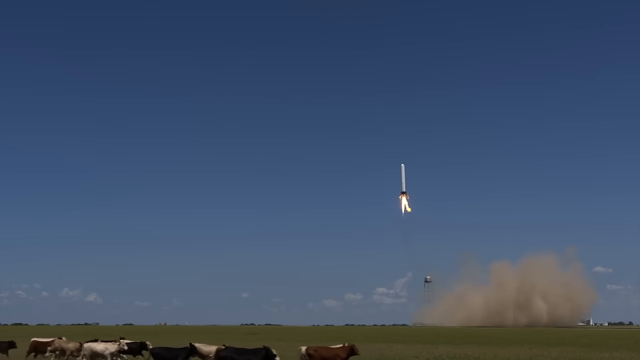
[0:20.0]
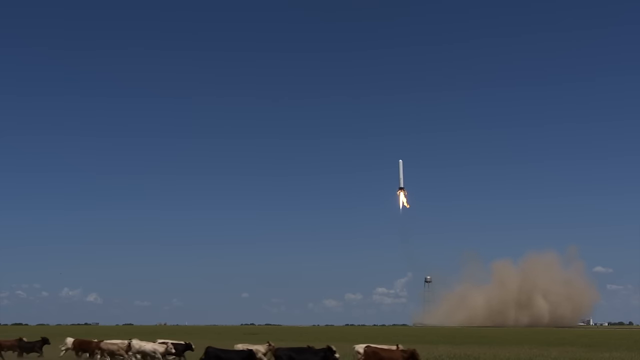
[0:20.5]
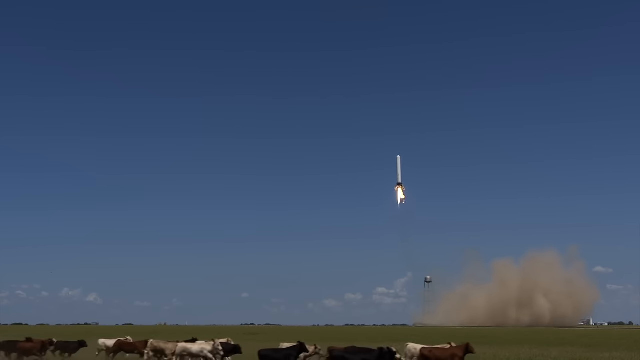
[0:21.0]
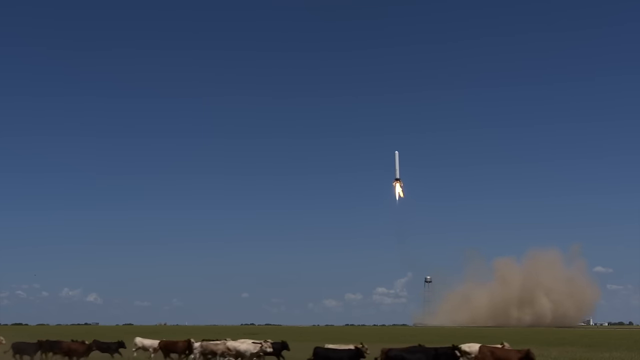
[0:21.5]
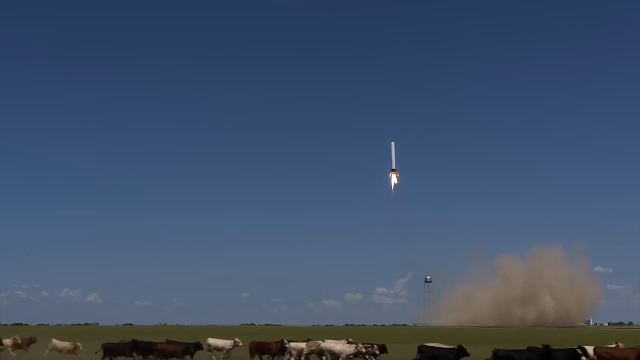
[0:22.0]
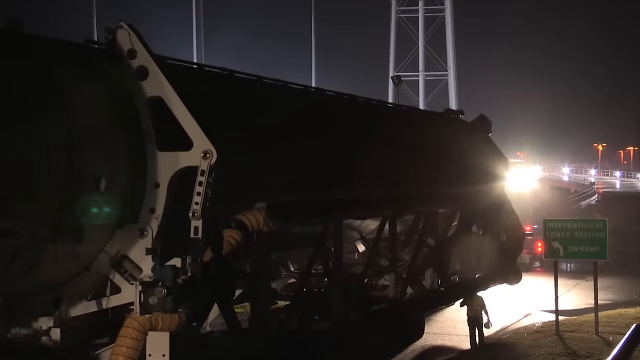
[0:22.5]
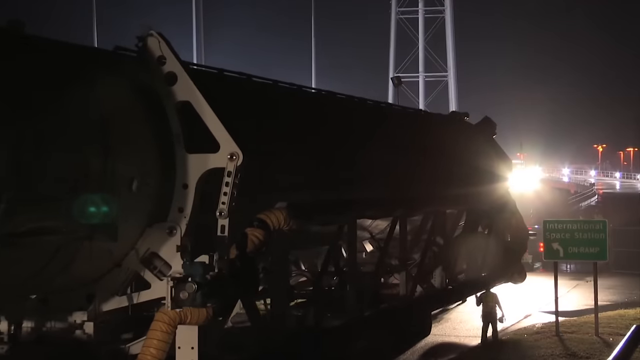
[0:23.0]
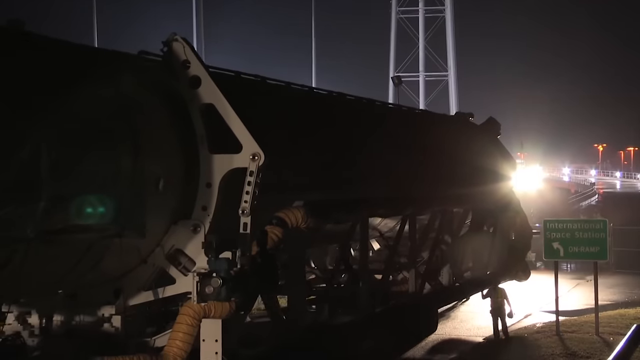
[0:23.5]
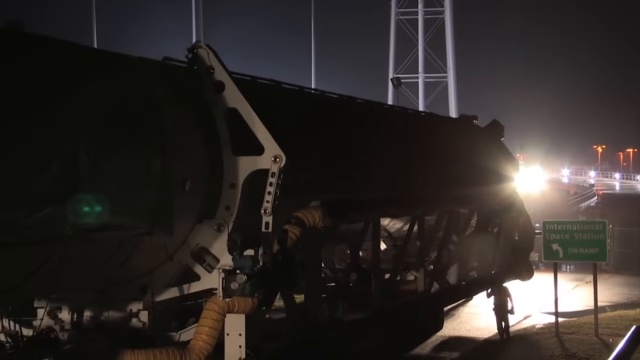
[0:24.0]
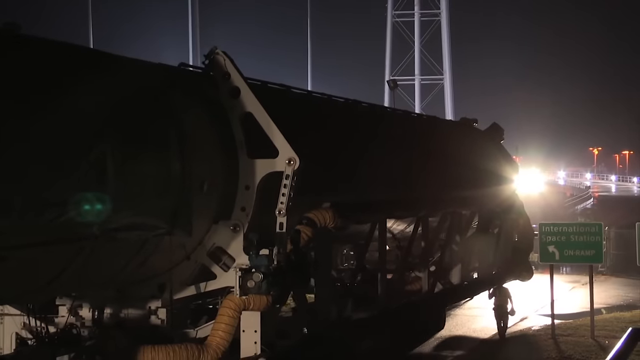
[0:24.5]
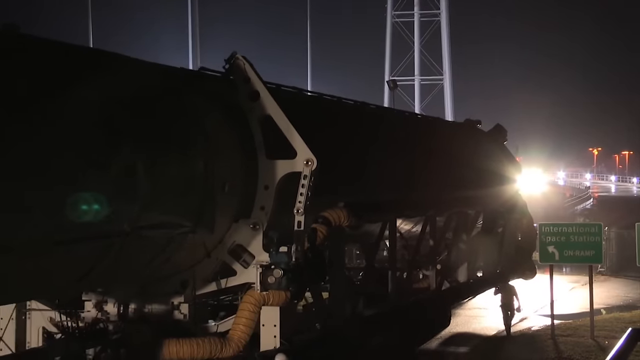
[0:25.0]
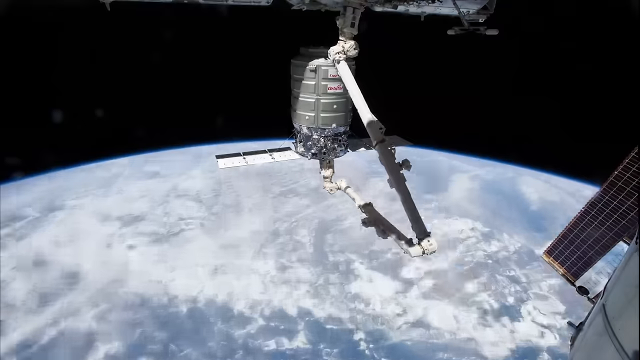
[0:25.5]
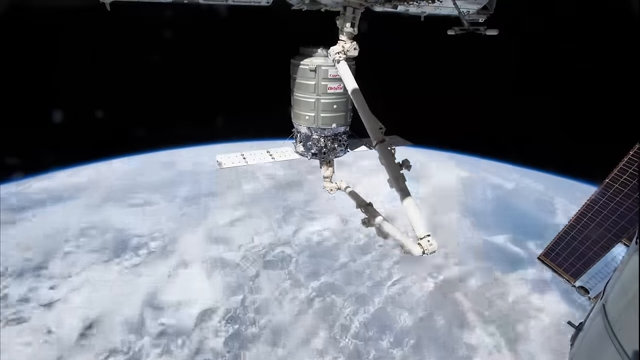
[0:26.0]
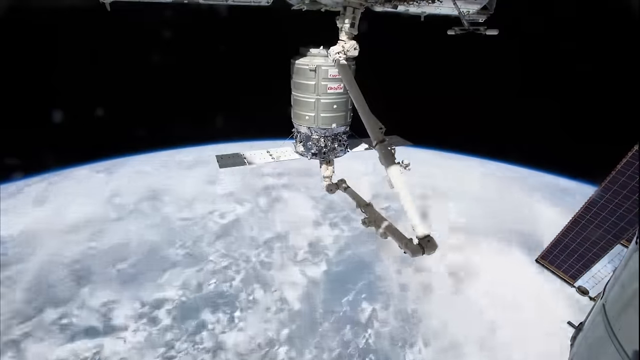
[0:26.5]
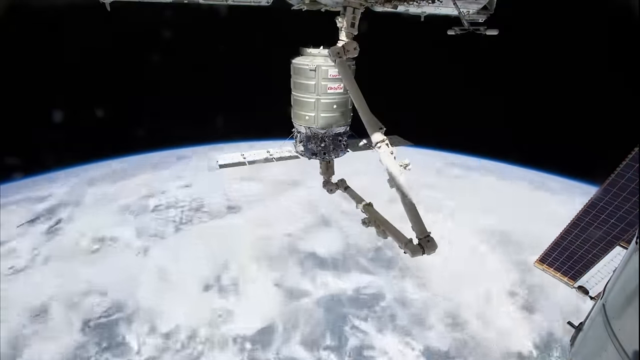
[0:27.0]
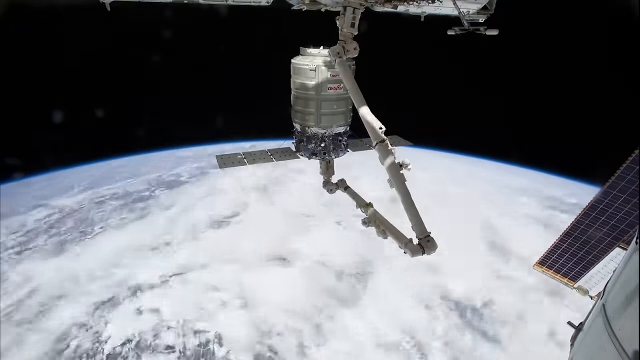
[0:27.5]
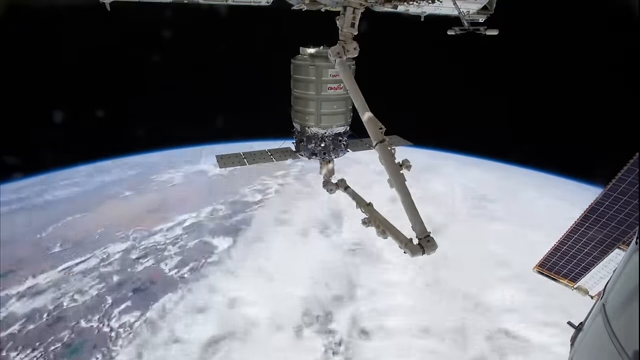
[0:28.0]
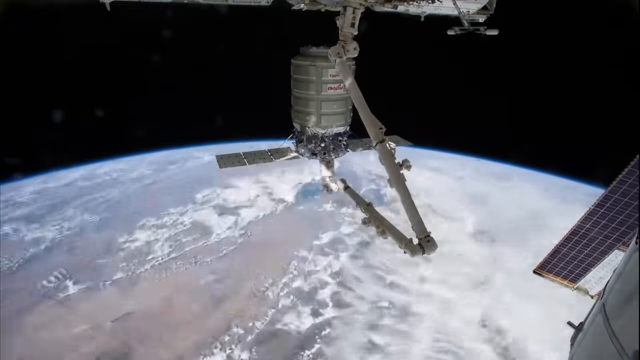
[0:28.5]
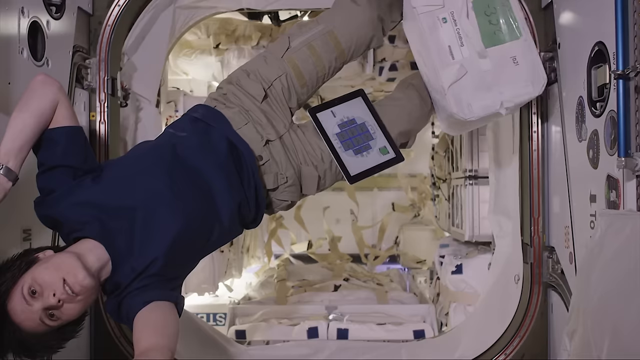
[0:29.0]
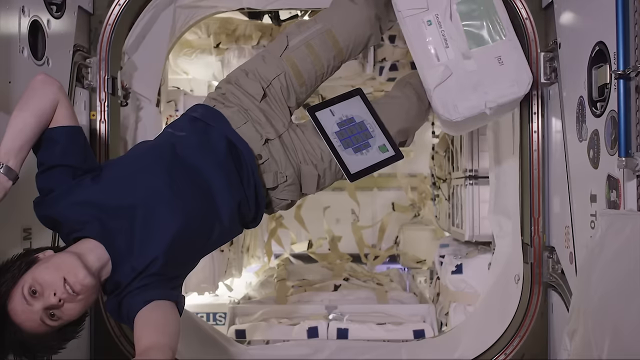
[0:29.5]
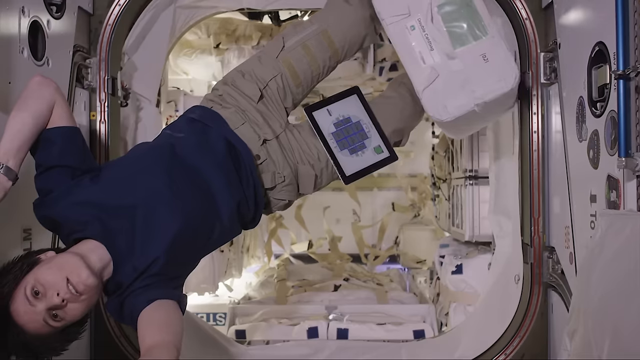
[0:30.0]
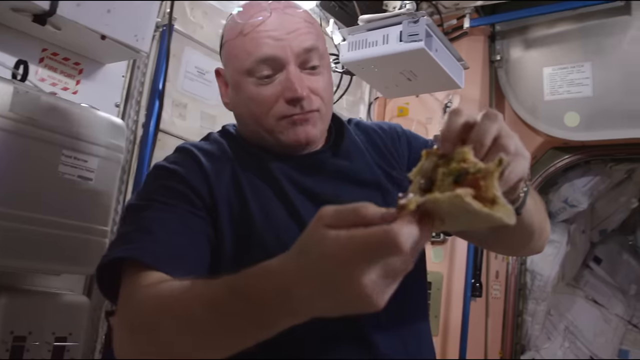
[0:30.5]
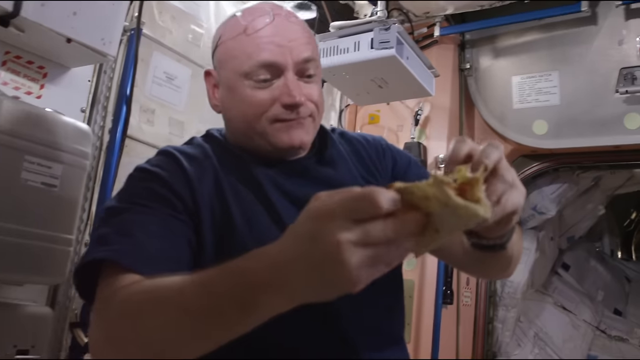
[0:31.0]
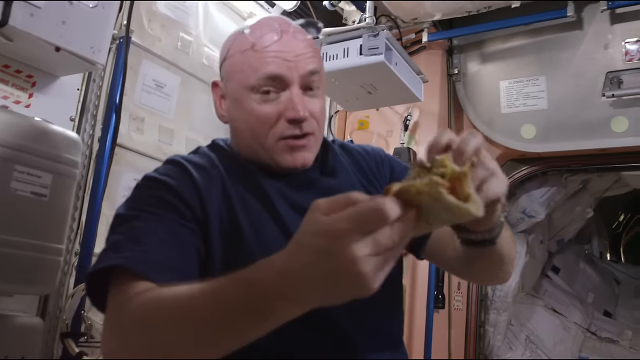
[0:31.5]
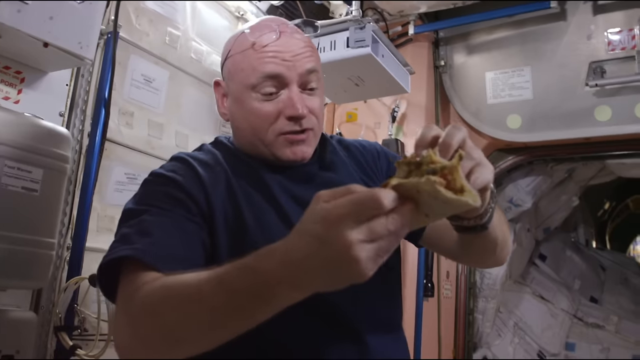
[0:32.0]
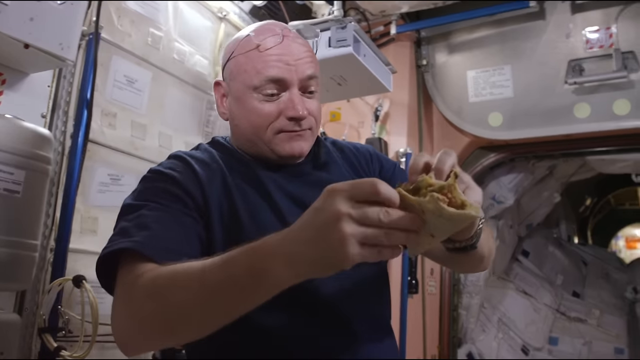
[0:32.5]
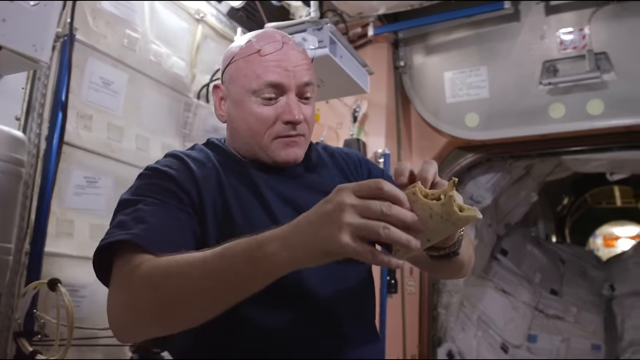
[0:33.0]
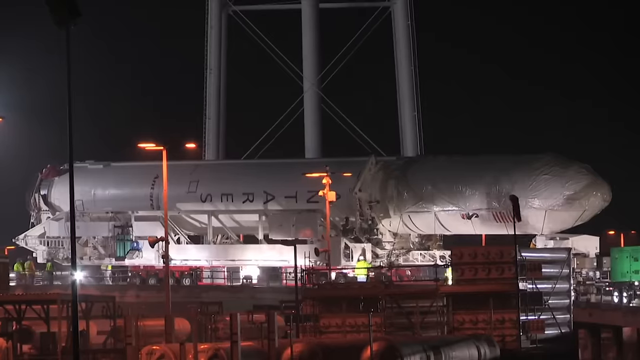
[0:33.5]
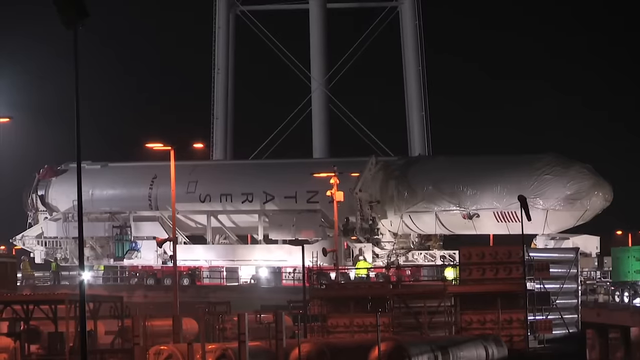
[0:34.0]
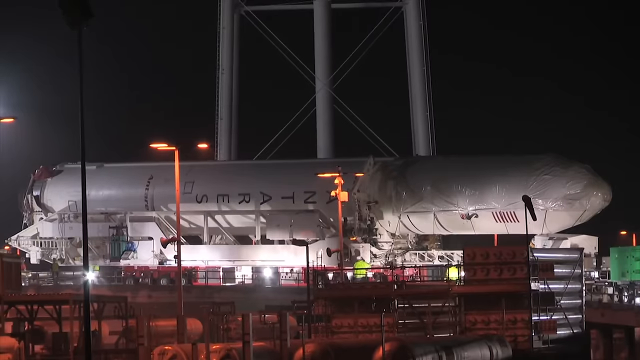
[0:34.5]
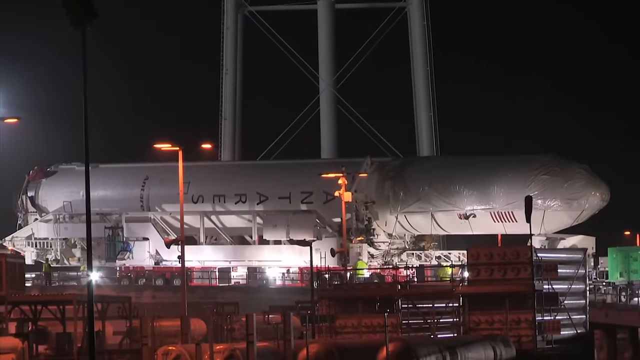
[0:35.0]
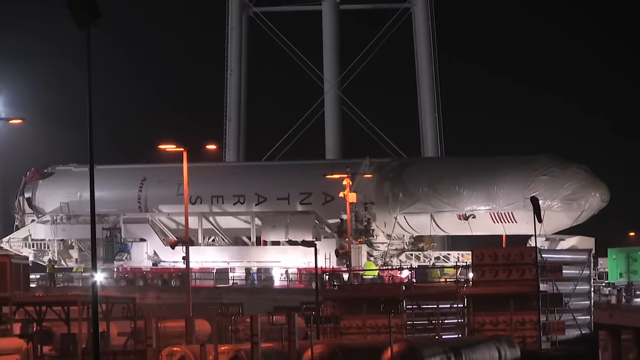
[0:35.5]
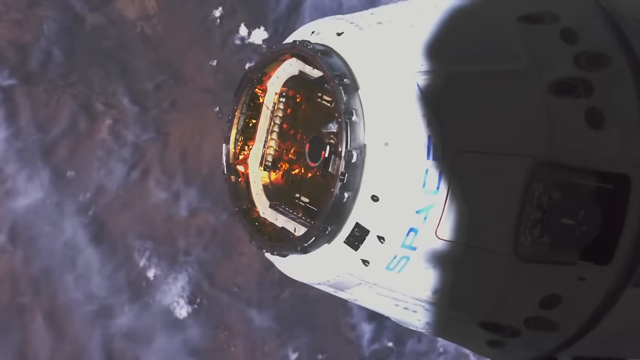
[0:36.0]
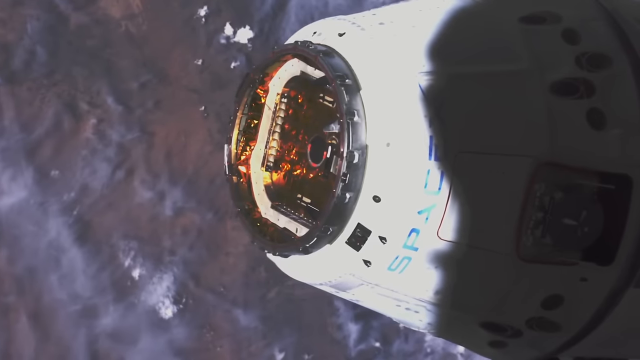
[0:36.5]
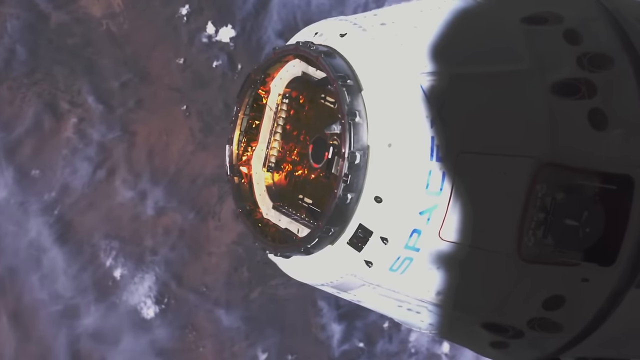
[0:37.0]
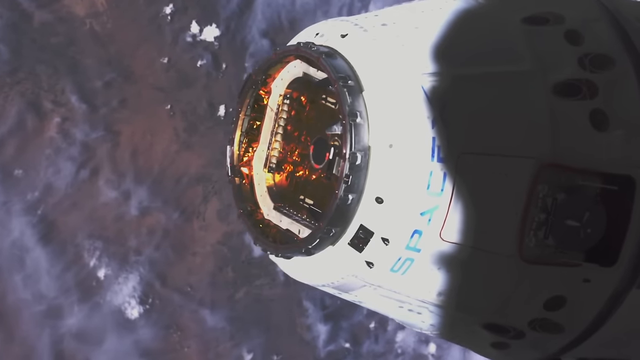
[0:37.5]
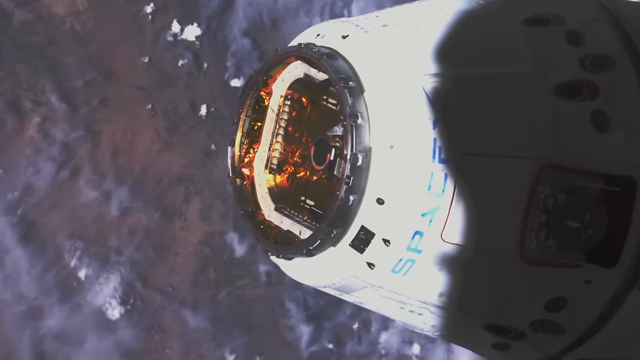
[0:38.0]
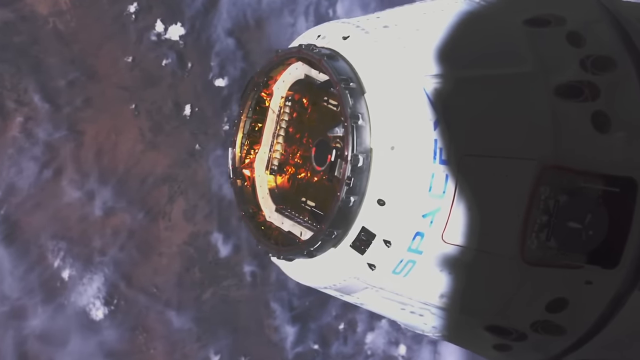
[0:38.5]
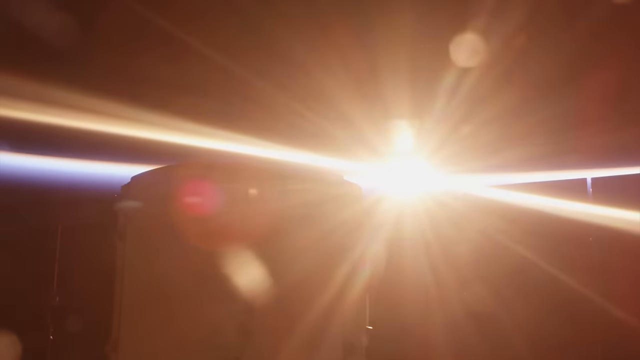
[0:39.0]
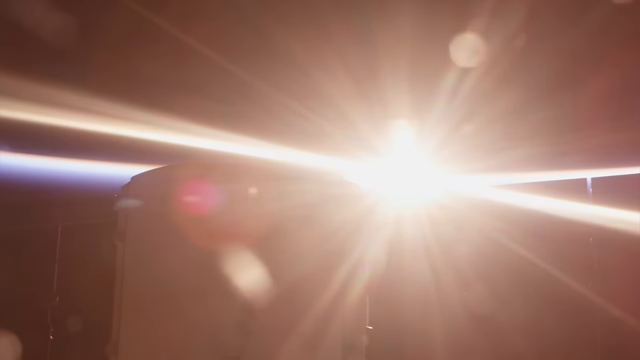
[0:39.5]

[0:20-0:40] A rocket takes off over a green field while many cows run from left to right at the bottom of the frame; the rocket appears to go up and slightly to the left. The scene changes to what looks like nighttime, where a rocket appears to be transported from the left to the far right on a road leading away from the viewer, with apparently one man at the front of it. A green sign at the bottom right reads "international space station" with a left arrow and "on ramp". Next comes what looks like a view from the bottom of a satellite: a white cylinder with two flaps coming out, a tubular arm that moves in and out, and a solar panel at the bottom right. In the background the horizon of the Earth rolls forward toward the viewer in what looks like a time lapse. Another shot shows an astronaut with his head at the bottom left and his feet at the top right, apparently floating; he wears a blue t-shirt and cargo pants and looks Caucasian. Another astronaut faces the viewer and slightly to the right, holding a tortilla in both hands in front of him and looking at it. He is bald and Caucasian, with his glasses over his forehead, and there are a lot of instruments behind him. He appears to be talking to the viewer while folding the tortilla, seemingly into a taco. The scene changes to what looks like a rocket laid sideways on a vehicle, being transported from left to right at night. Another shot, apparently SpaceX footage, shows a little white capsule with its top in the middle of the frame facing left, with what looks like the Earth behind it. Finally, what looks like the sun over the horizon shines over some sort of object seen as a black silhouette in front of the viewer.